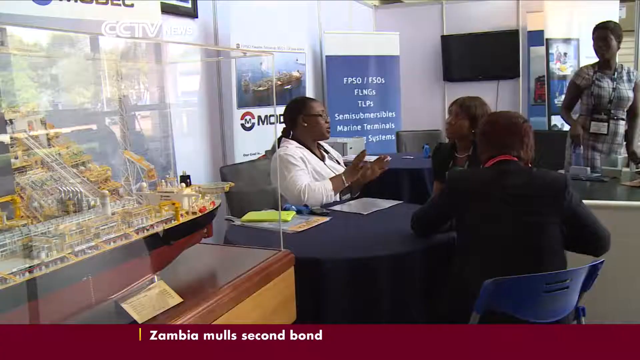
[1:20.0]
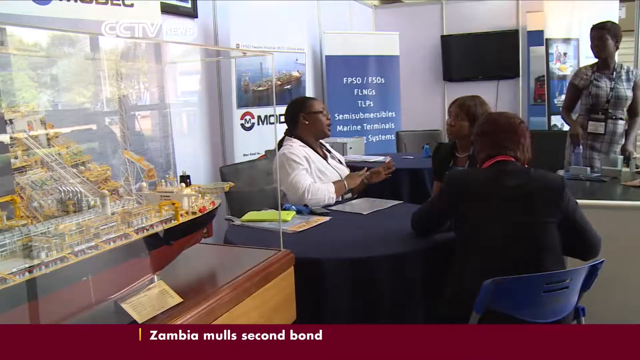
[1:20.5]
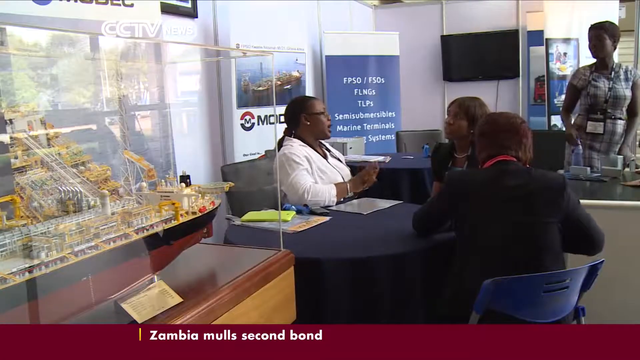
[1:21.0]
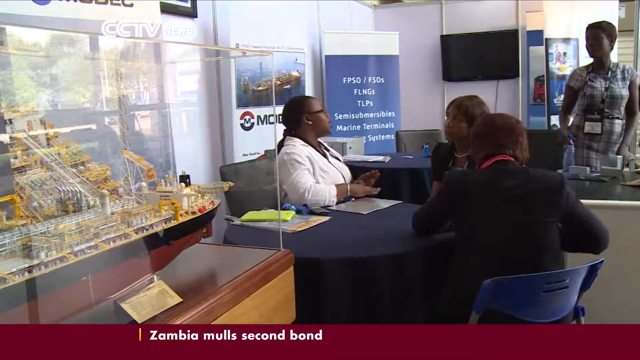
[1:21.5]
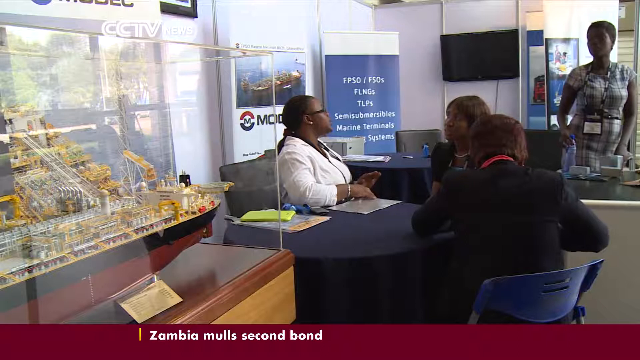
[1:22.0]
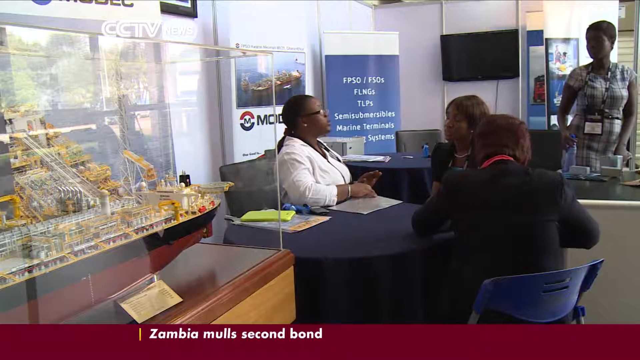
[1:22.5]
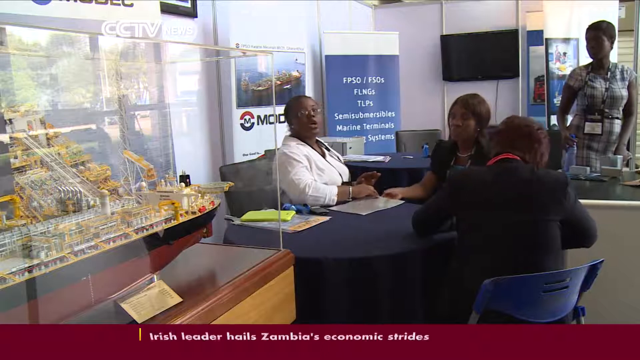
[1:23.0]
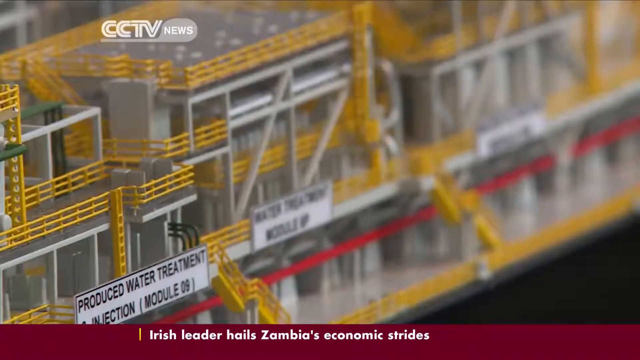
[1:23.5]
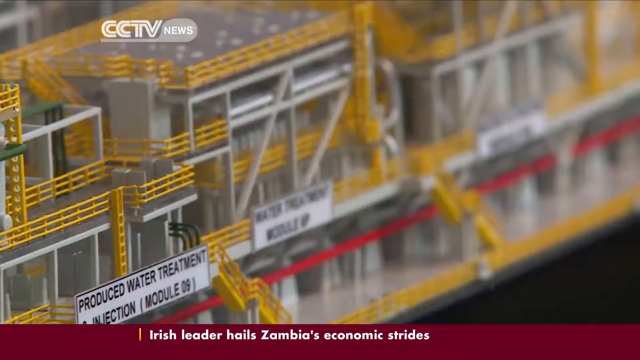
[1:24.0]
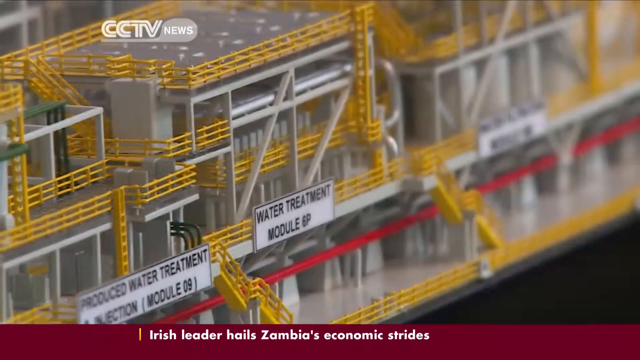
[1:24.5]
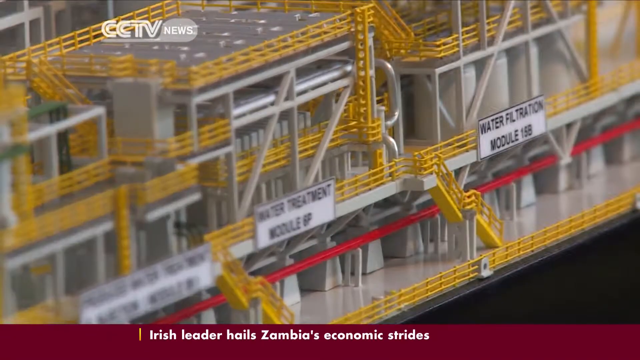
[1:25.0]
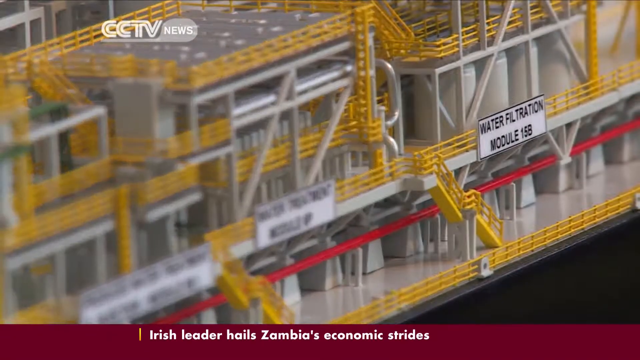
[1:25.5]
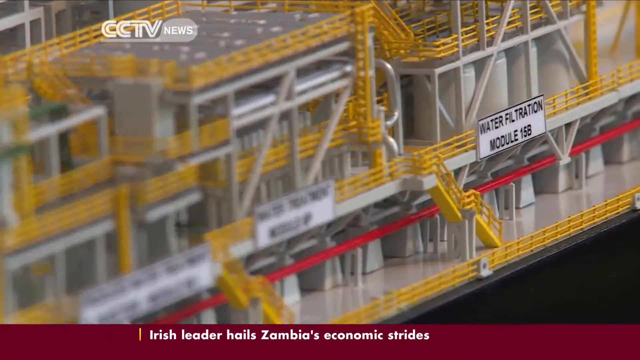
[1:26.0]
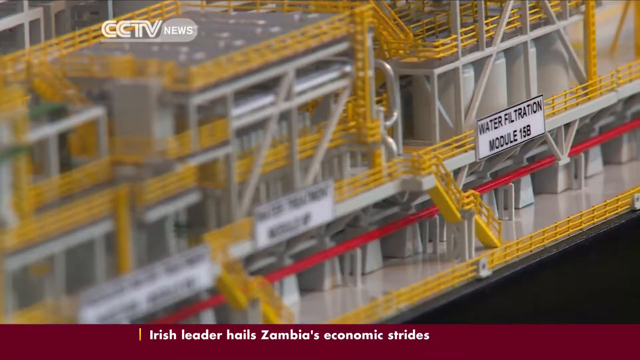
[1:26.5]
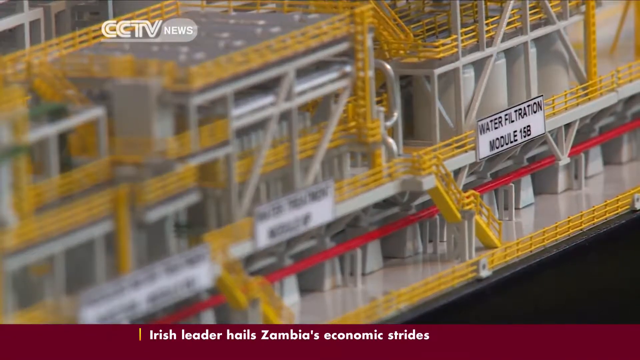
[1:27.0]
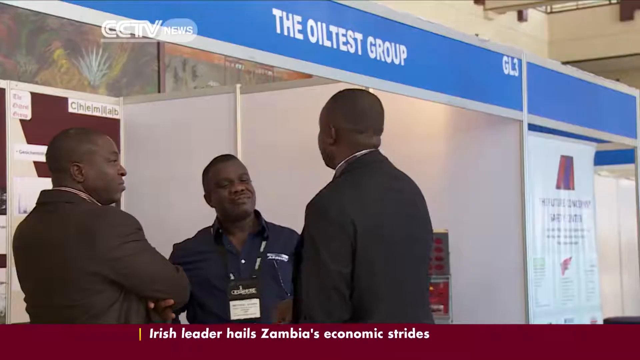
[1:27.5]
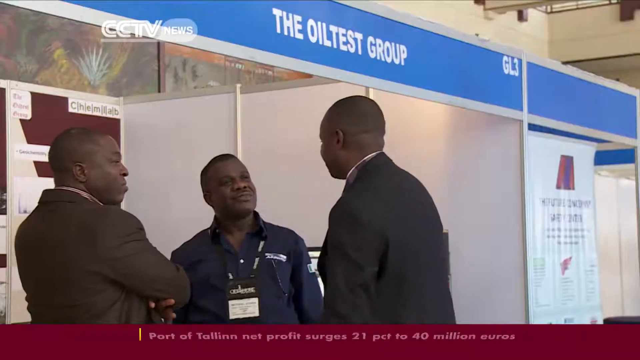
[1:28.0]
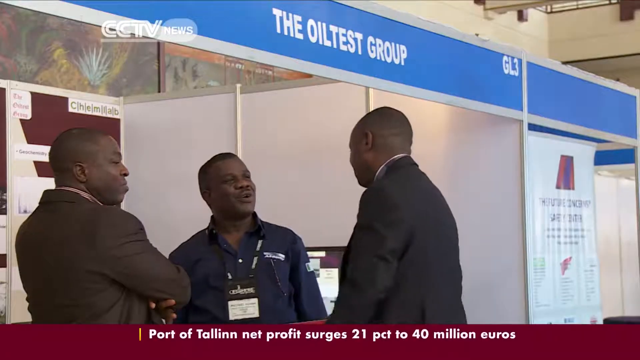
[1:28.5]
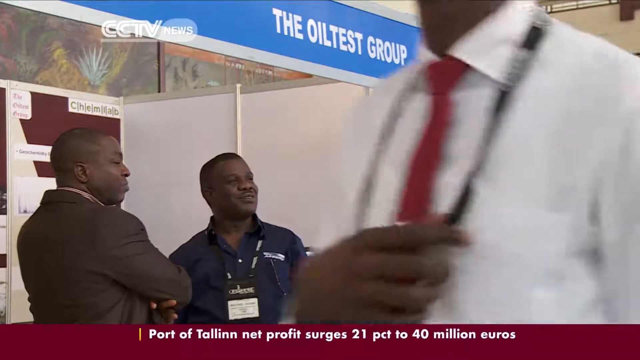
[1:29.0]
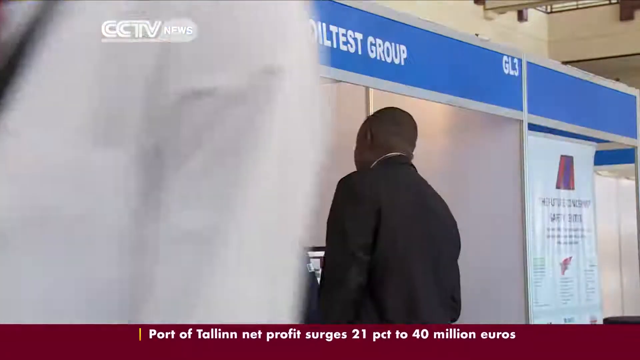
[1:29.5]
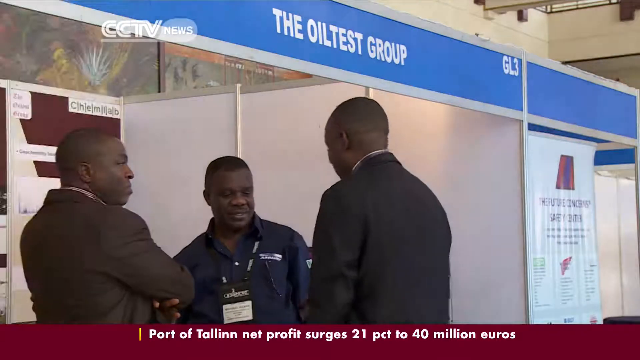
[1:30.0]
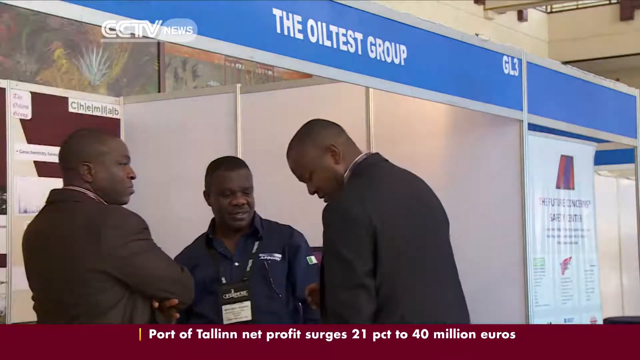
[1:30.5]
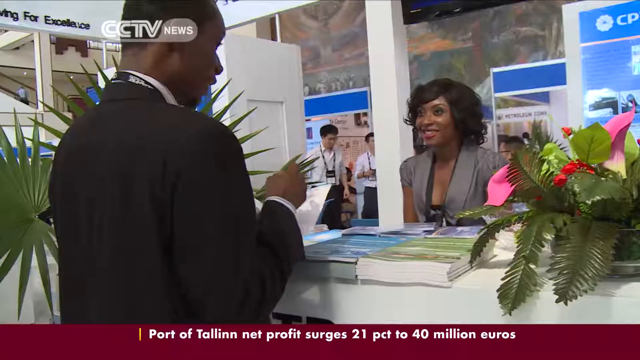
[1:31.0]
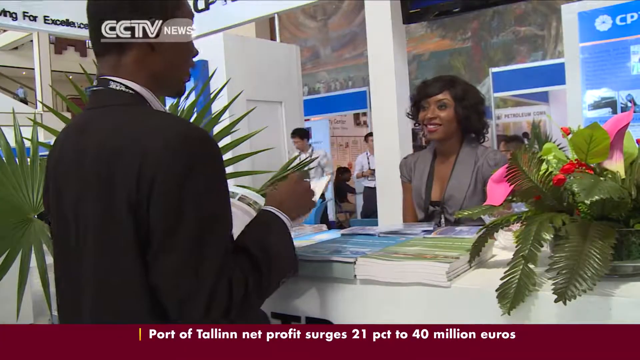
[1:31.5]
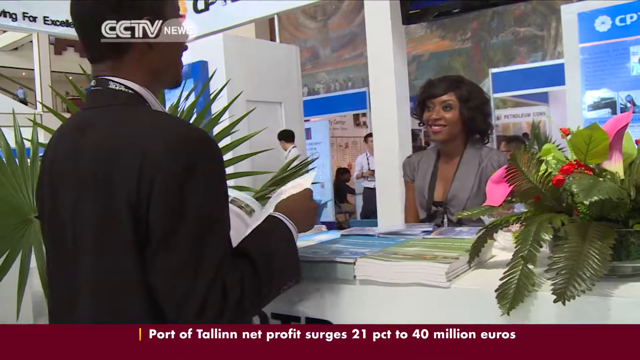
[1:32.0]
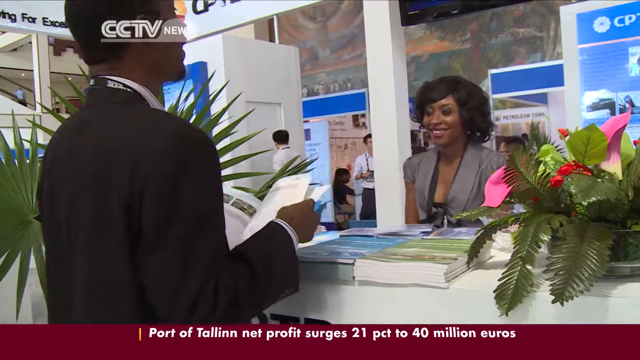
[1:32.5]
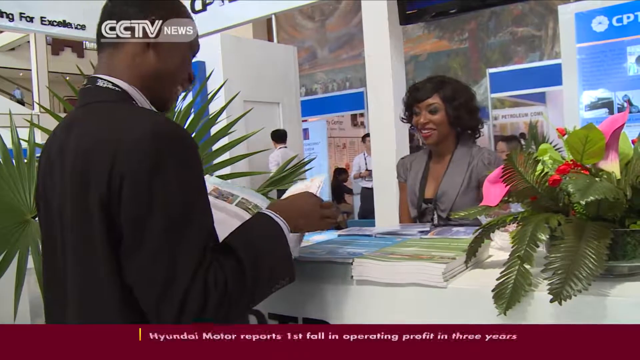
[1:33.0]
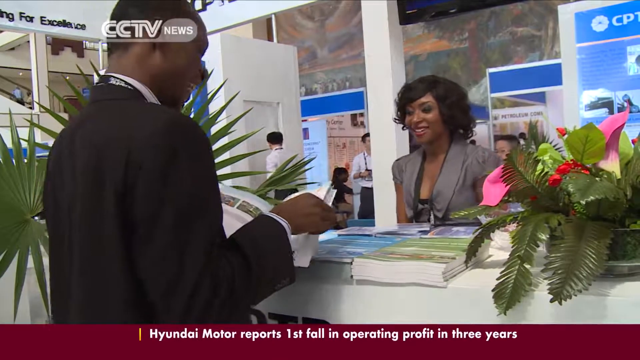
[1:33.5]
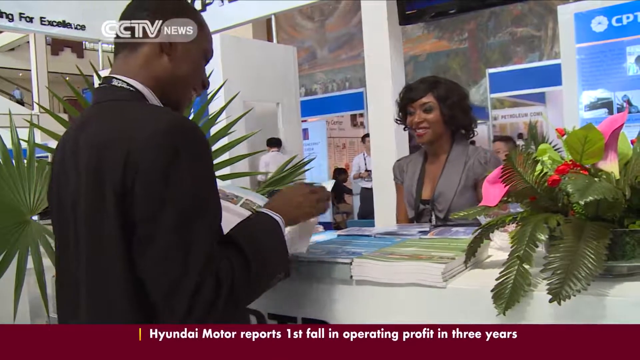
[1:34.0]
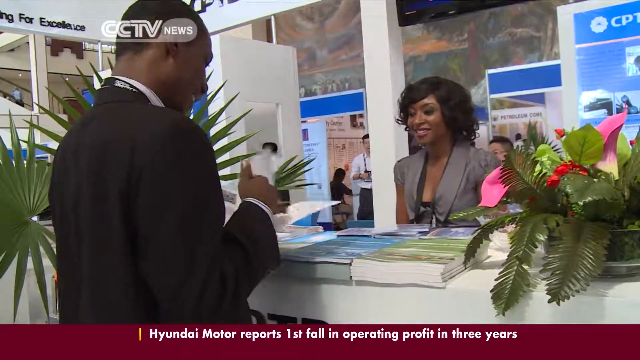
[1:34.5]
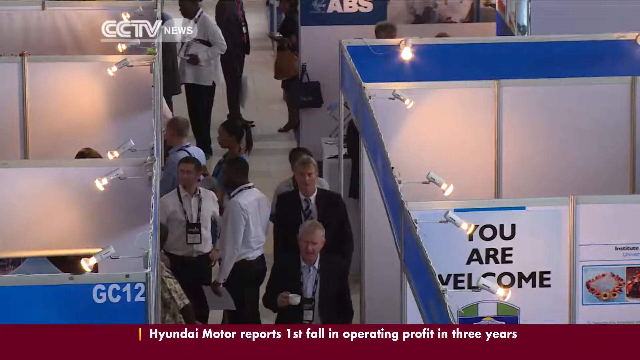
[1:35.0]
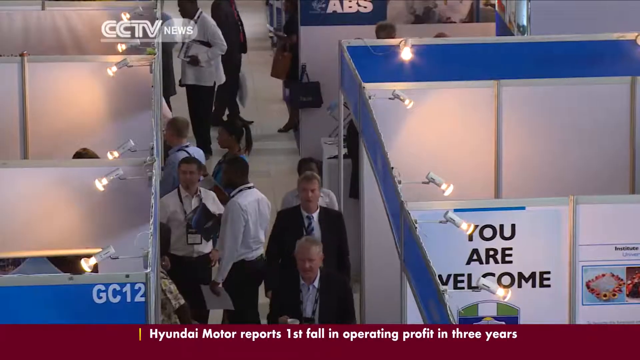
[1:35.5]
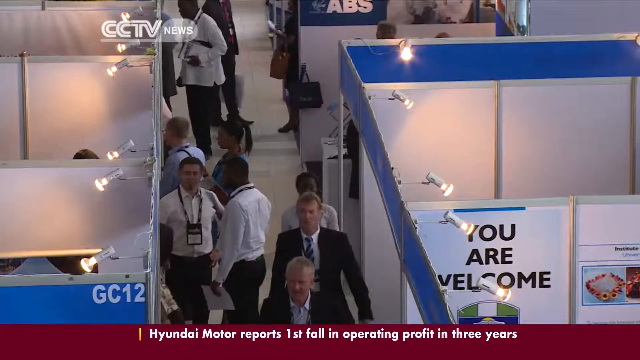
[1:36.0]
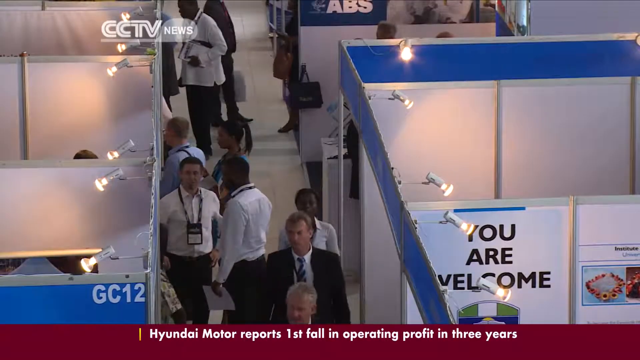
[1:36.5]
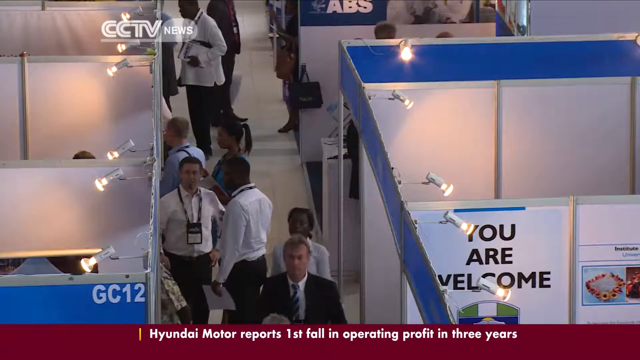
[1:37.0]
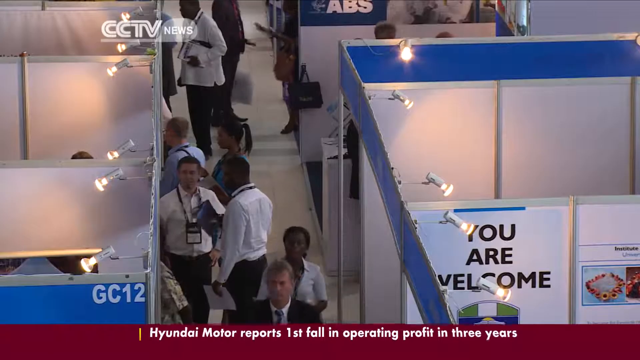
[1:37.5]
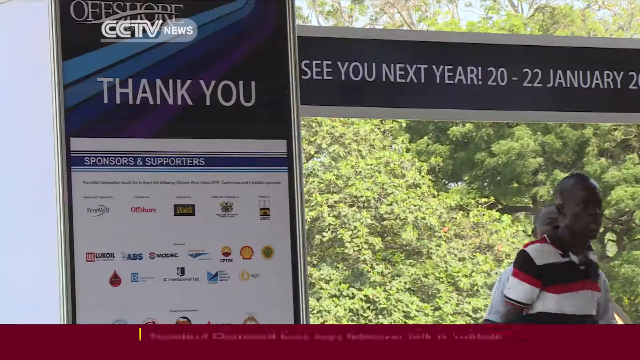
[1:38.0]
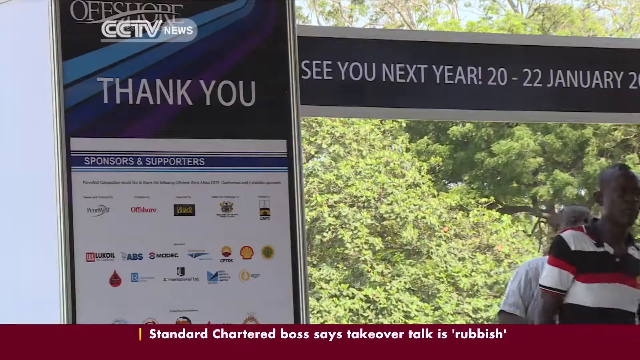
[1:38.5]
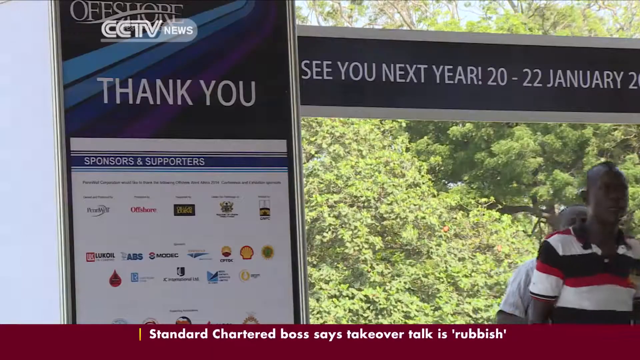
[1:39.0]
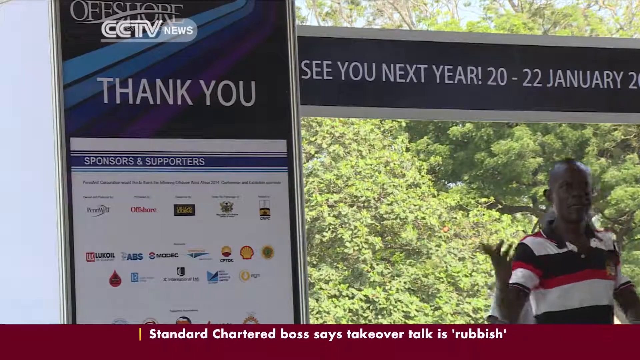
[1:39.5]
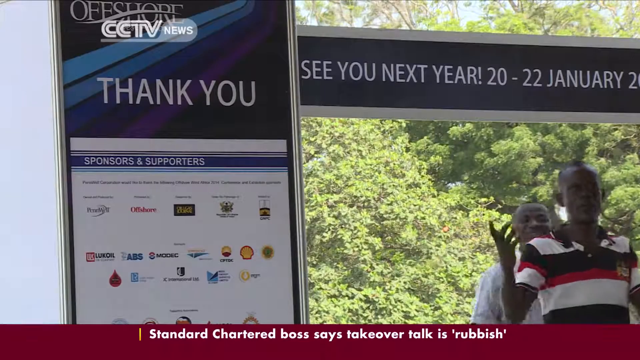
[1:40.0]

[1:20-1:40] The news channel "CCTV News" appears in the top left, followed by a heading on a building that reads "Welcome to Offshore West Africa" in white writing on a grey background. The roof appears to be brown. At the bottom, the name of the report reads "18th annual West Africa offshore oil conference," written in black, followed by the name "Africa Live" on a red background. A few people appear to be at work. A man in a white shirt seems to be building some type of project, and people are speaking to colleagues. Two women are present, one in a blue dress and one in a red dress. A man named Ian McKay is being interviewed.